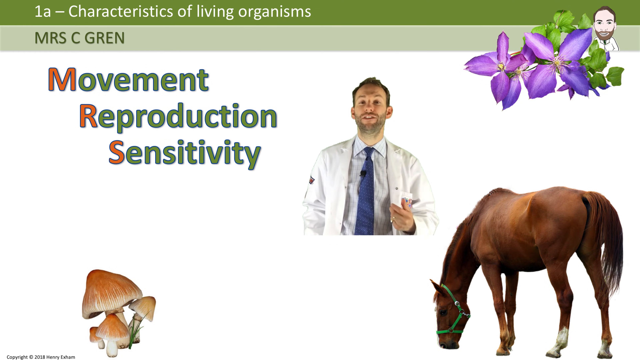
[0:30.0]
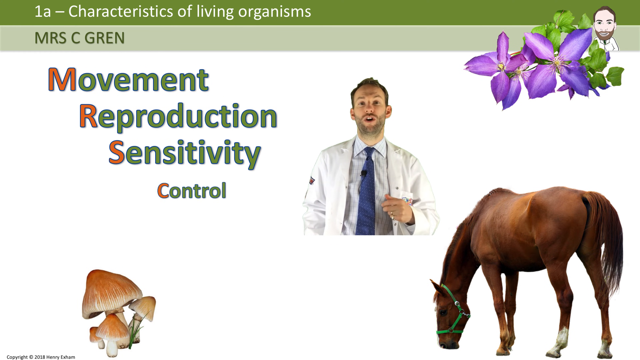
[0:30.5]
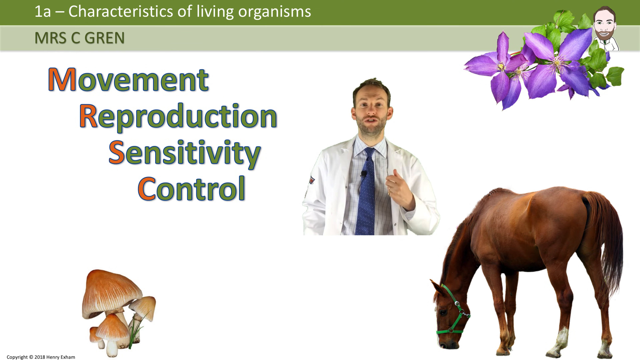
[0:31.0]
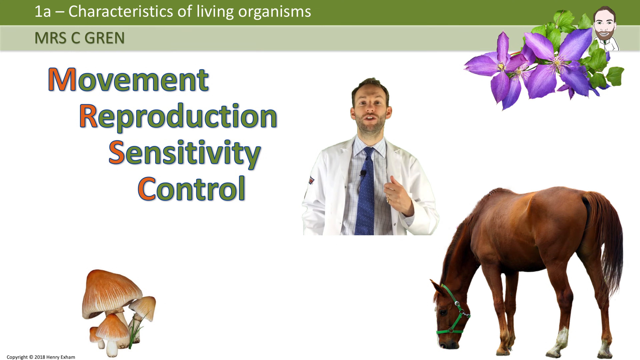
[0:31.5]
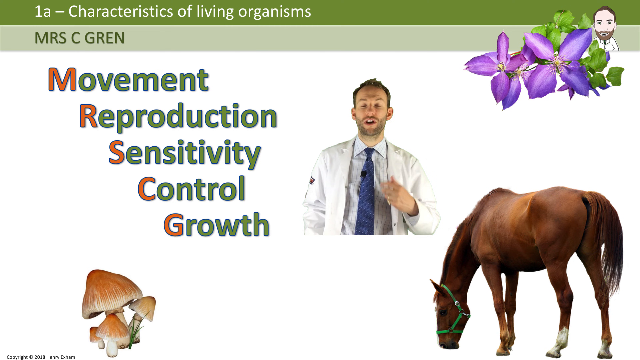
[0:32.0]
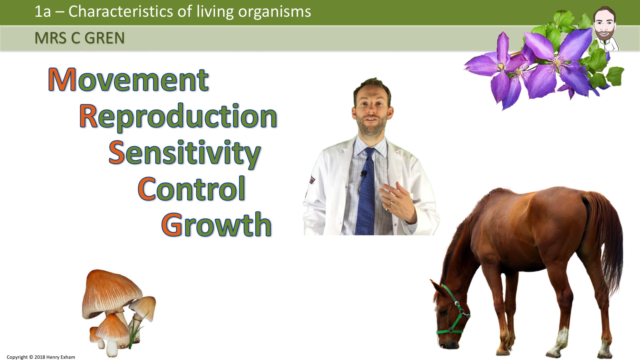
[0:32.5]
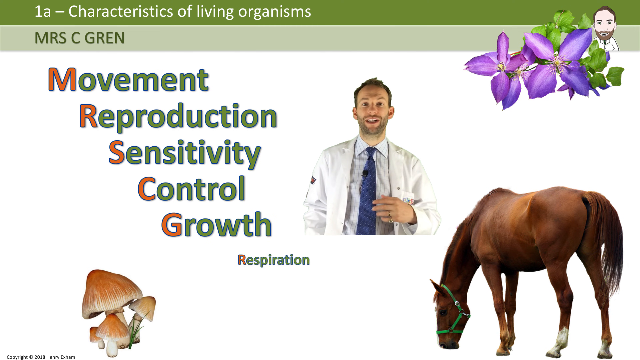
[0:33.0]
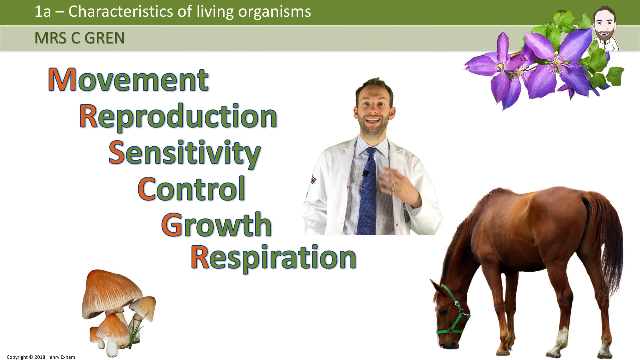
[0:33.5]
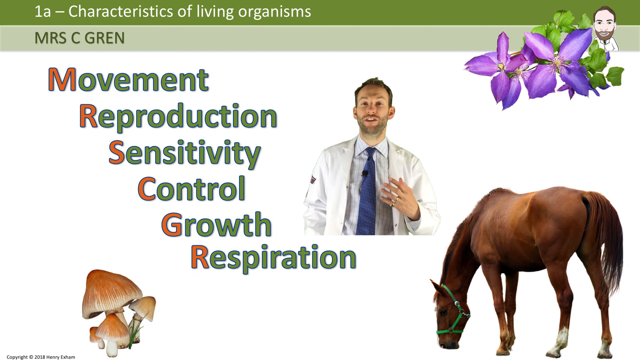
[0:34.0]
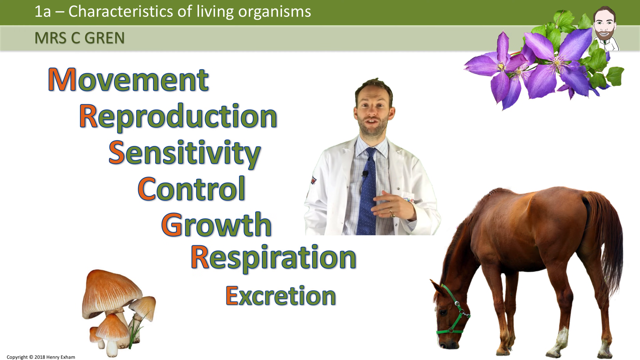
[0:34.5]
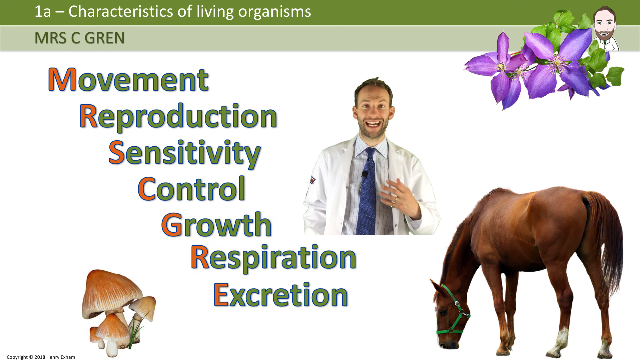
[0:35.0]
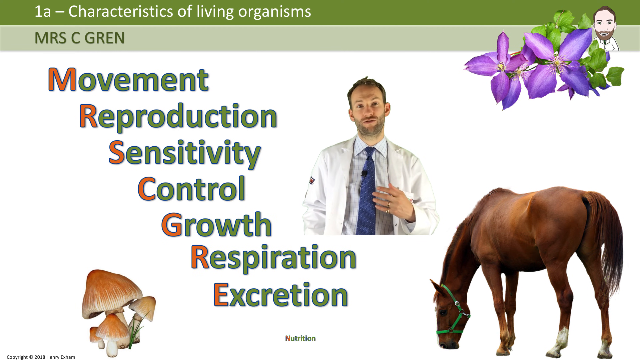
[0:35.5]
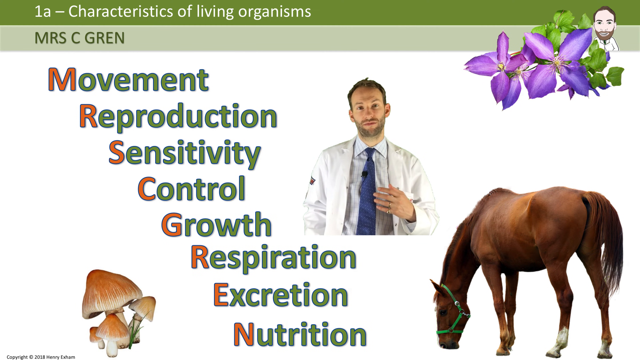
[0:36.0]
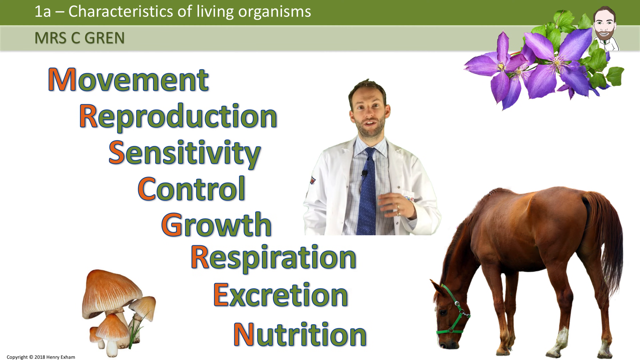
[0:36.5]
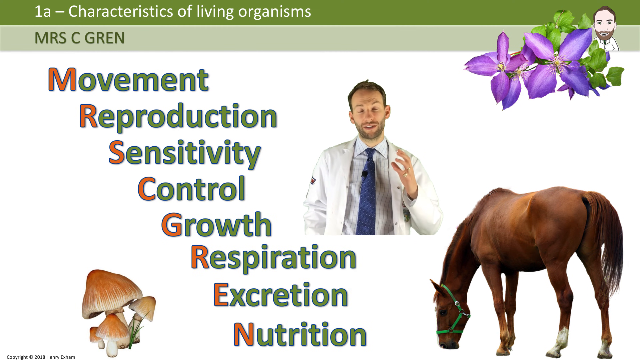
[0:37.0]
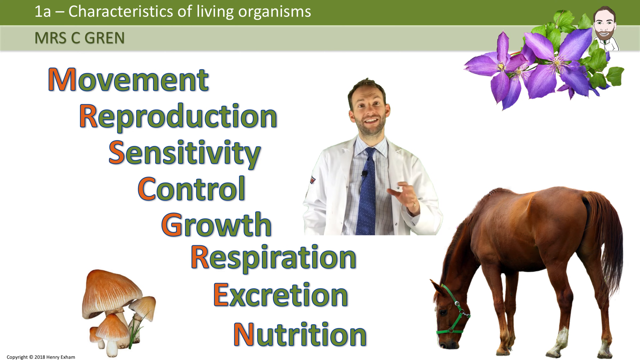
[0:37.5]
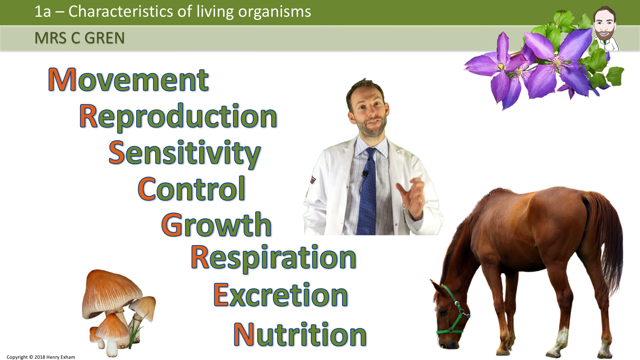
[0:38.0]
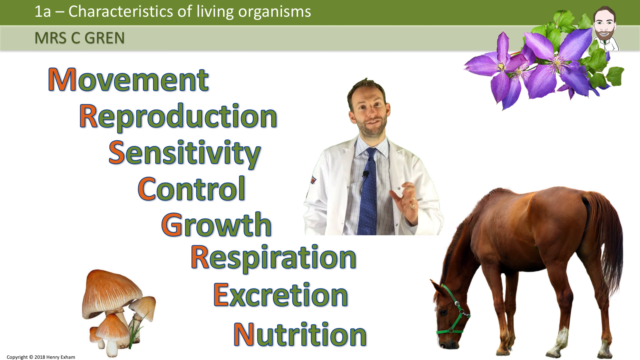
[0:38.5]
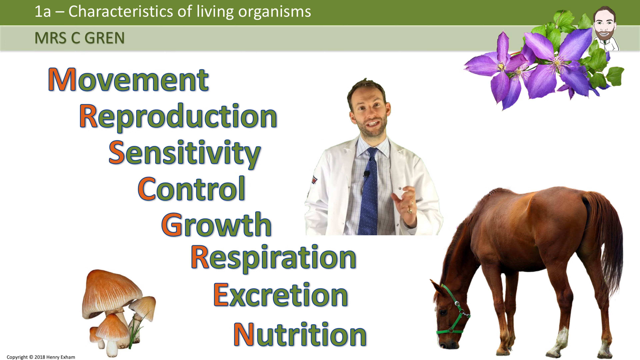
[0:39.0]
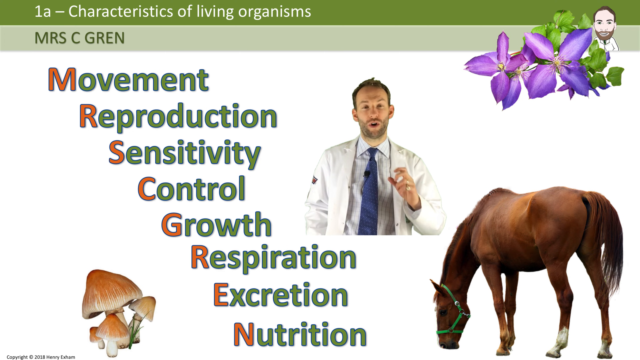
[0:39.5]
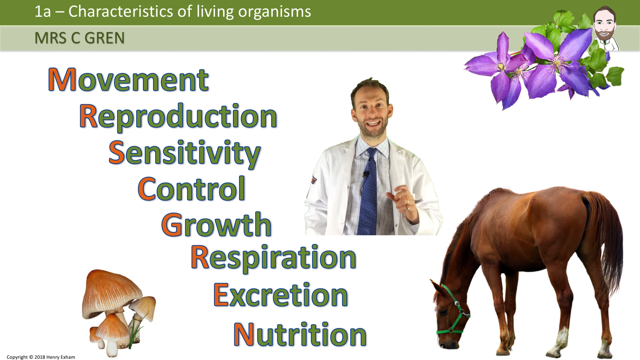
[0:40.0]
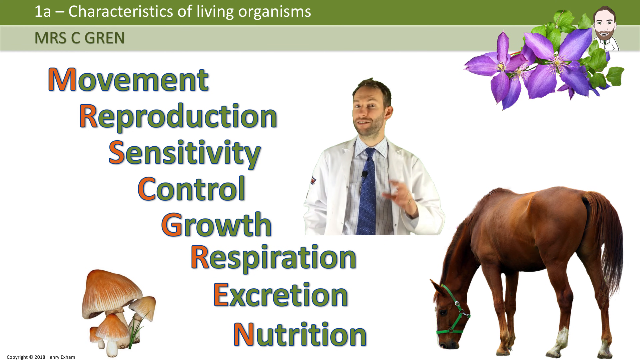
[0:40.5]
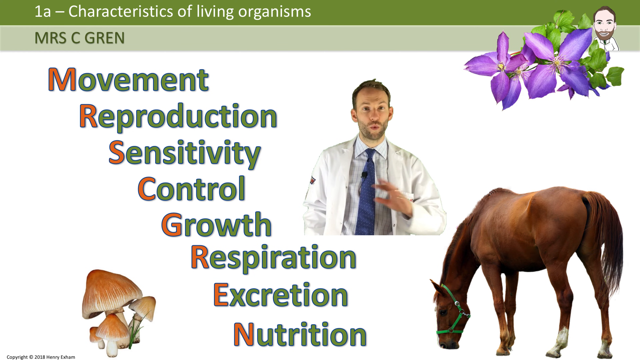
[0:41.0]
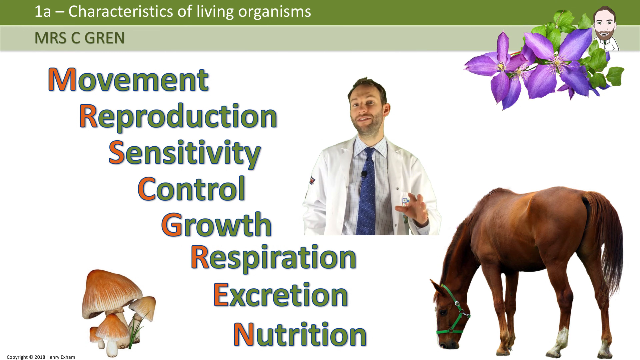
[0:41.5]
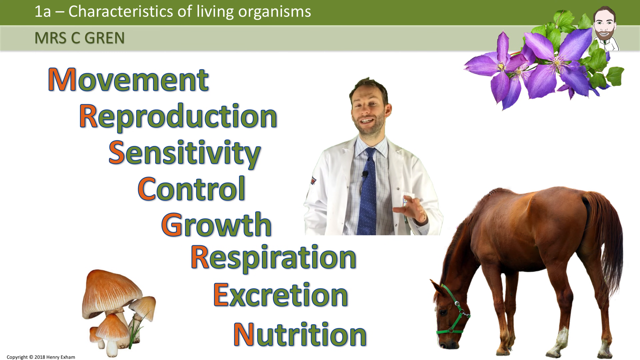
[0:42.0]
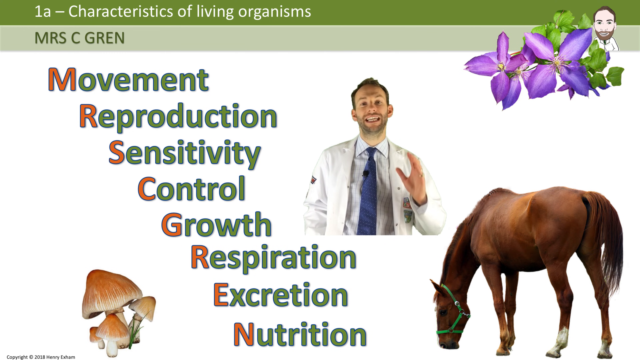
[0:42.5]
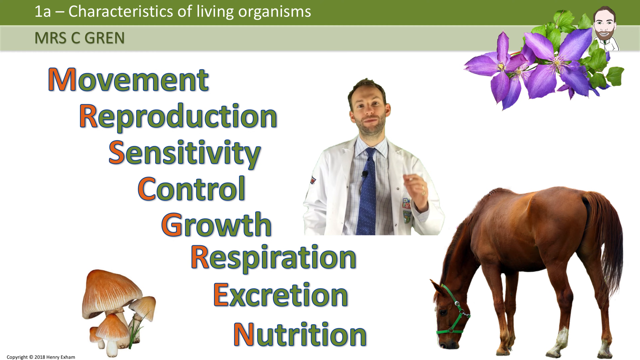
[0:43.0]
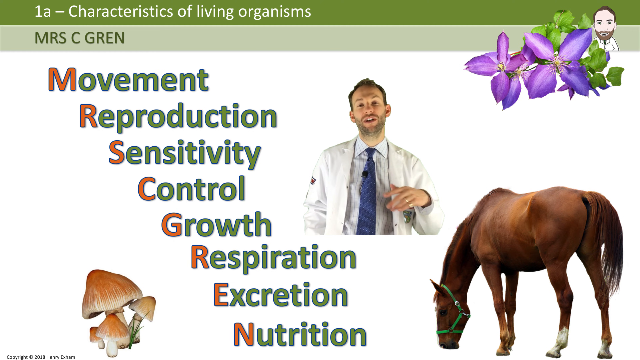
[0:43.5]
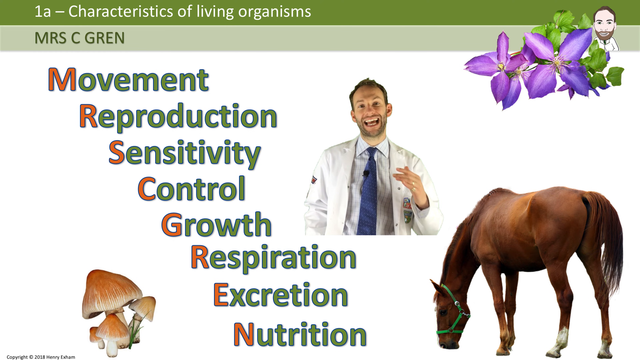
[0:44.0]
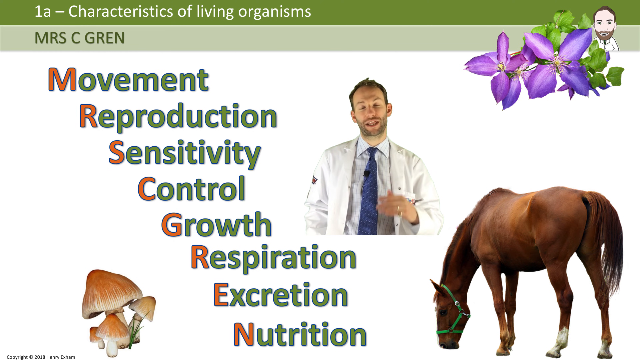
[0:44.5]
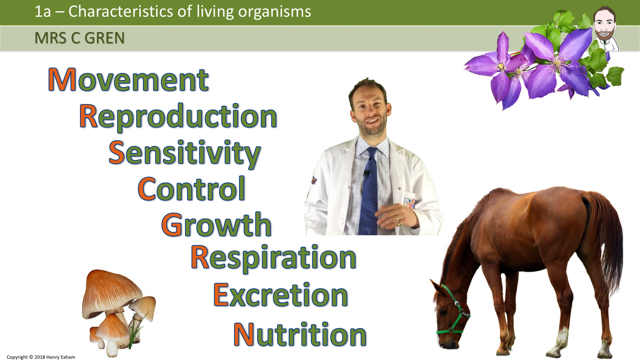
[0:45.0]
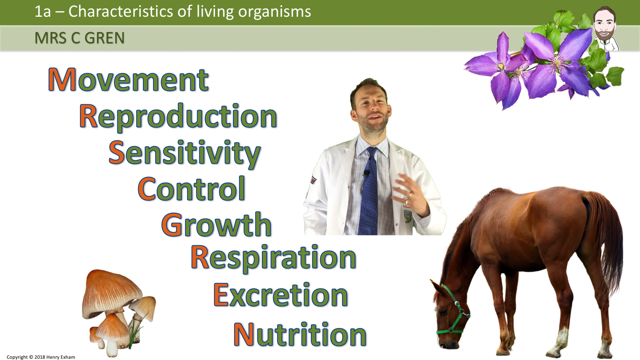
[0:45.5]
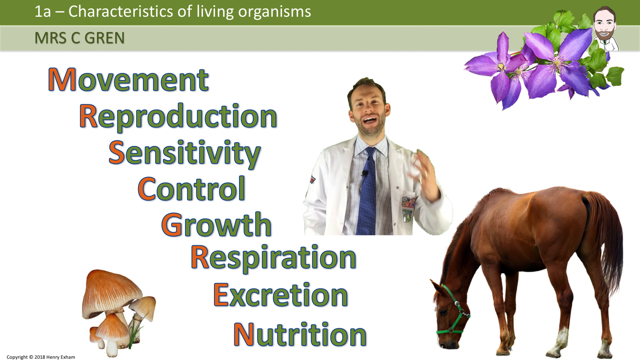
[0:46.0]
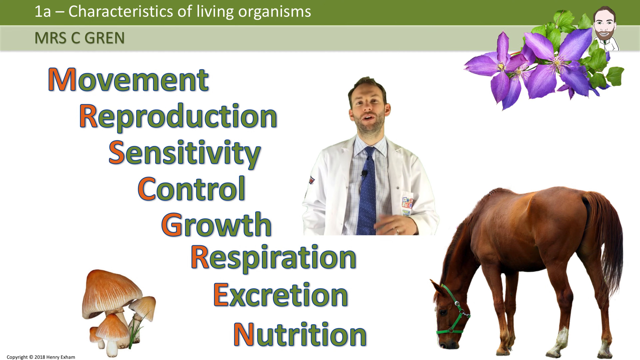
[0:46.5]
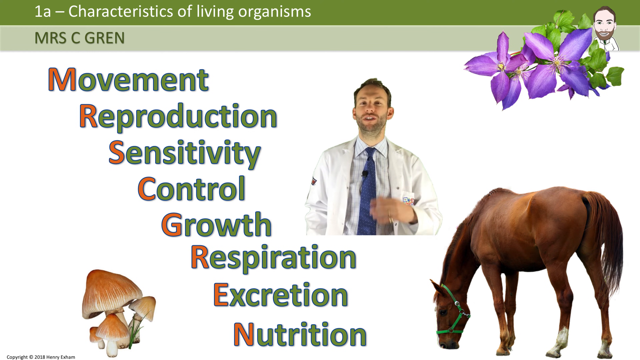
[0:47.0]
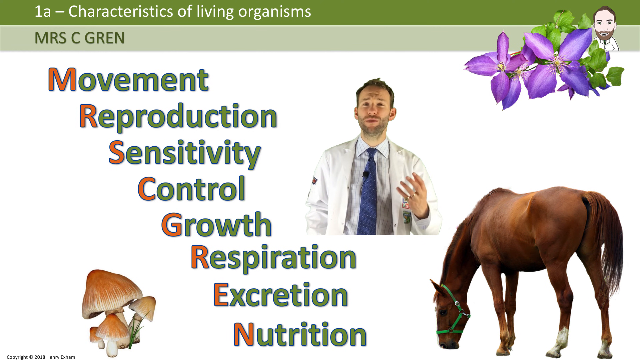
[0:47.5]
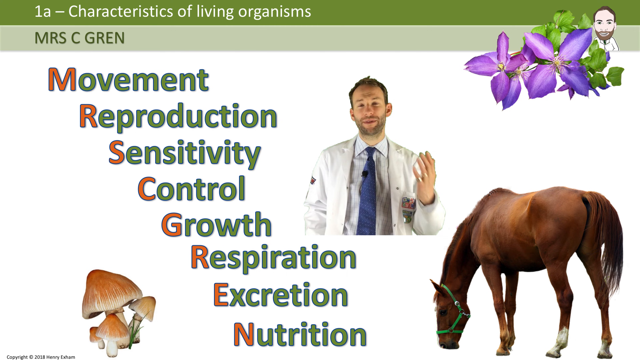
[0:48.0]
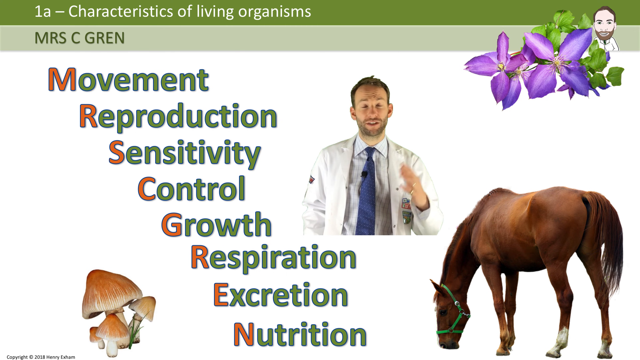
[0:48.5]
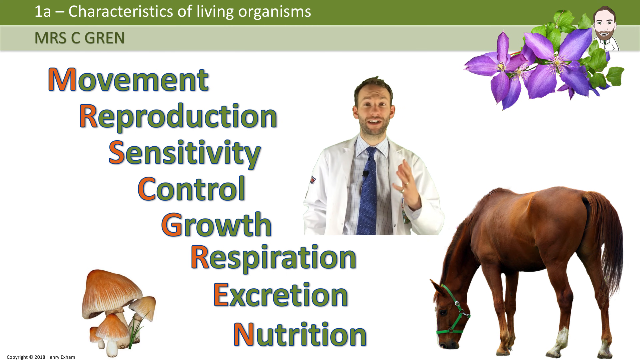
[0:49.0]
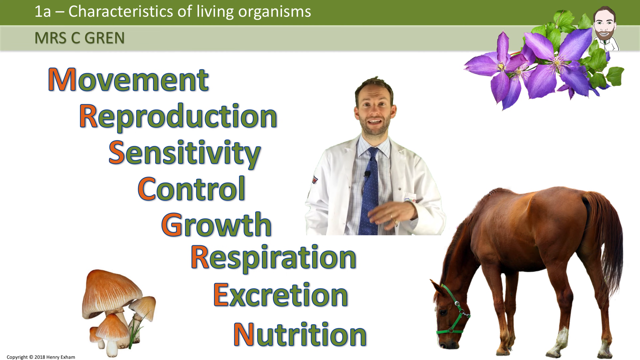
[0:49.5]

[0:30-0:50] The words "movement", "reproduction" and "sensitivity" are still on screen, as is the brown horse in the bottom right. The mushrooms in the bottom left are also brown, in a slightly lighter tone, with off-white coloration. The purple flowers in the top right have four distinct petals each, and the cartoon of the scientist is seen standing behind the green leaves of the flowers. As the scientist continues to speak, the word "control" is added underneath the list, followed one below another by "growth", "respiration", "excretion" and "nutrition". The scientist keeps talking, wildly gesturing with his right hand as he looks towards the audience, moving his head a lot and speaking in a quite animated way.